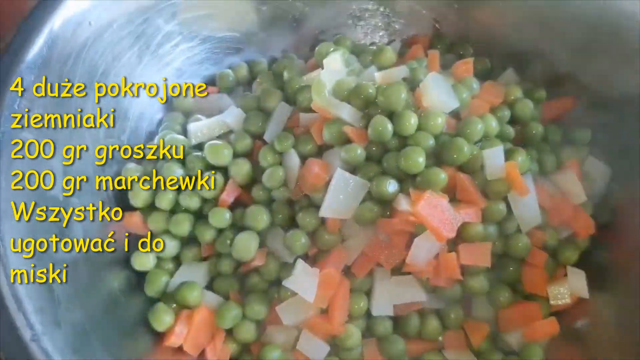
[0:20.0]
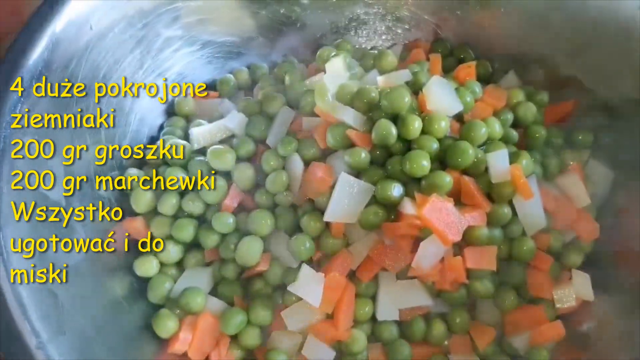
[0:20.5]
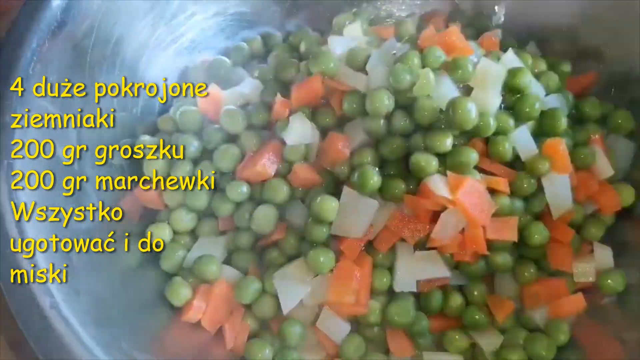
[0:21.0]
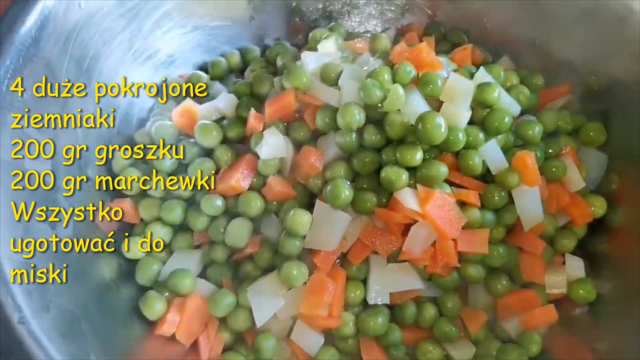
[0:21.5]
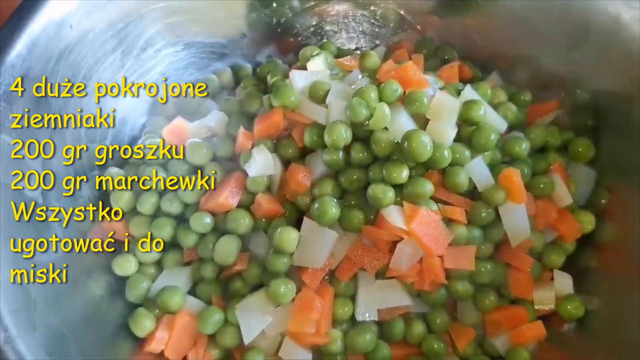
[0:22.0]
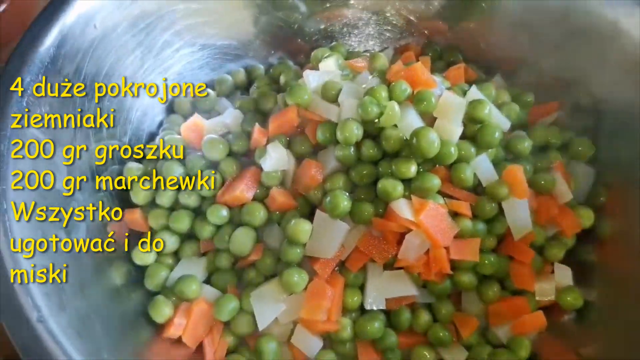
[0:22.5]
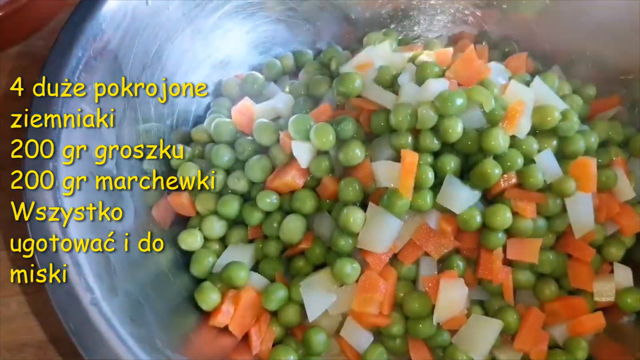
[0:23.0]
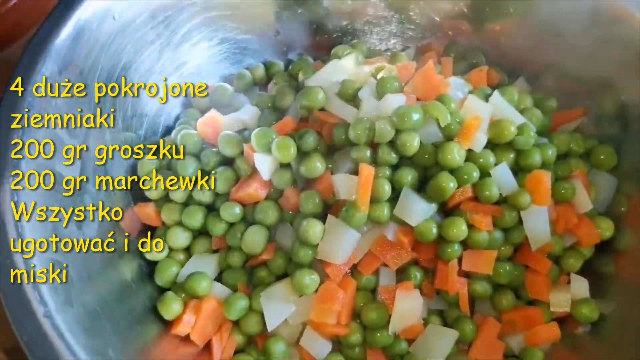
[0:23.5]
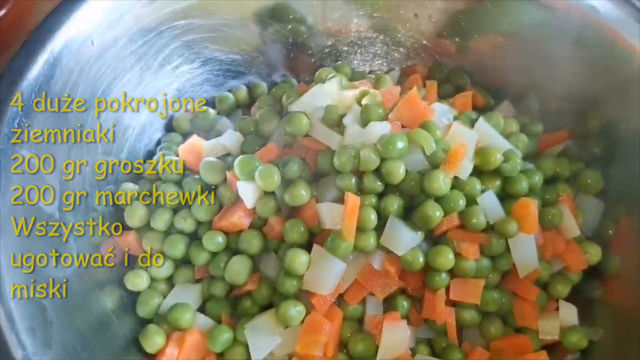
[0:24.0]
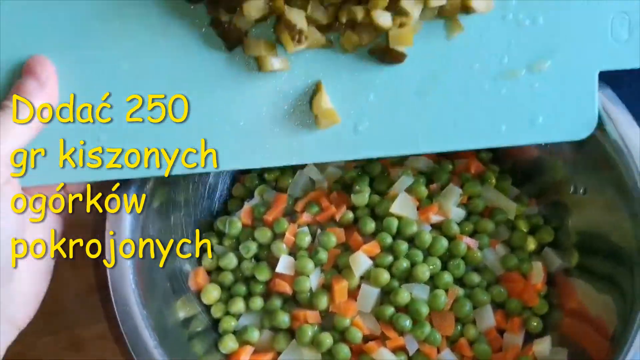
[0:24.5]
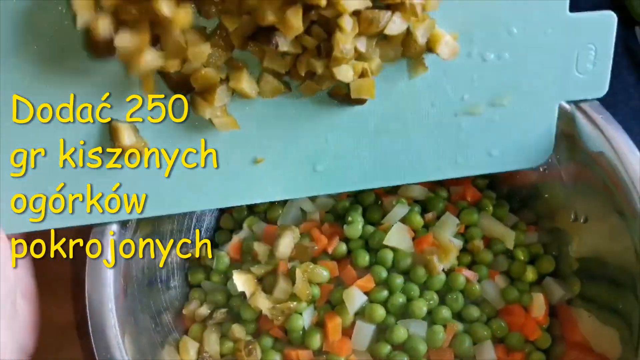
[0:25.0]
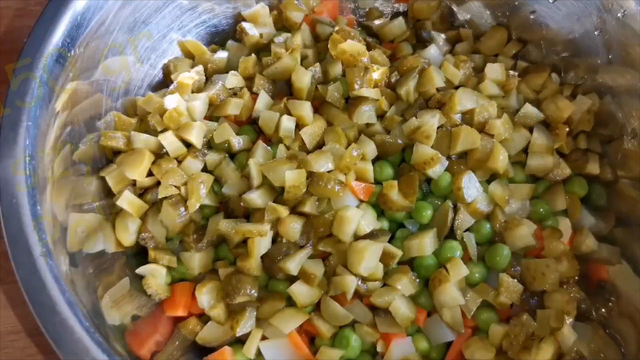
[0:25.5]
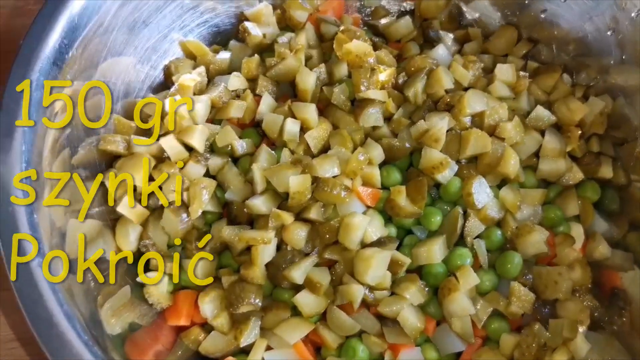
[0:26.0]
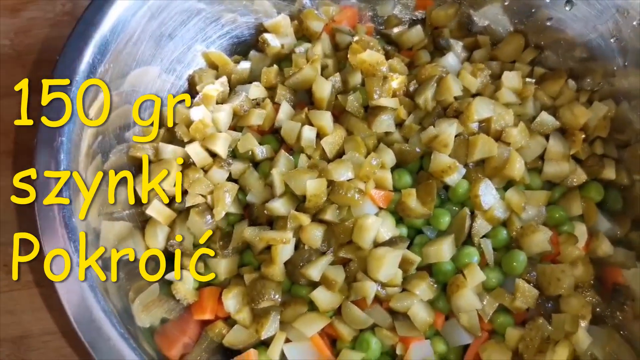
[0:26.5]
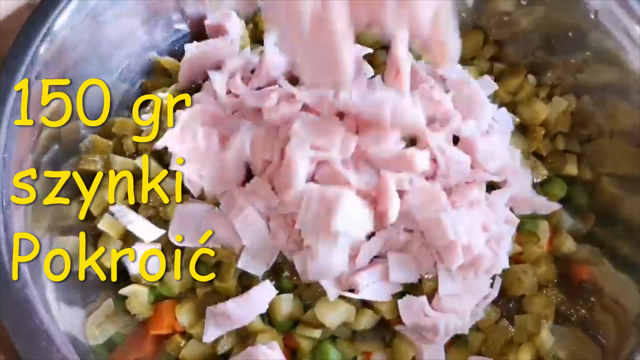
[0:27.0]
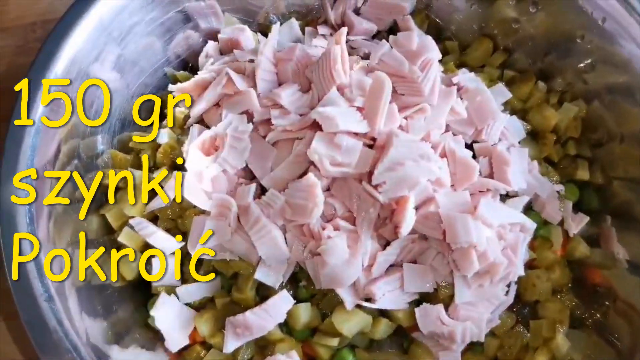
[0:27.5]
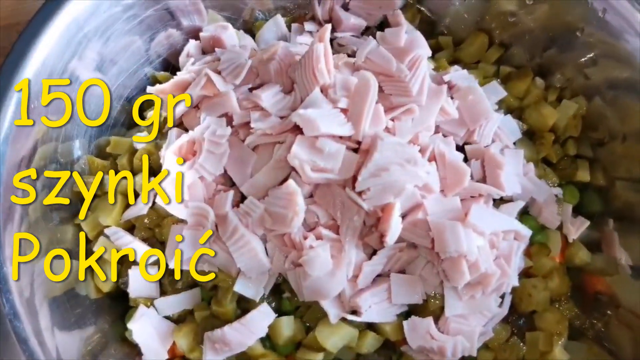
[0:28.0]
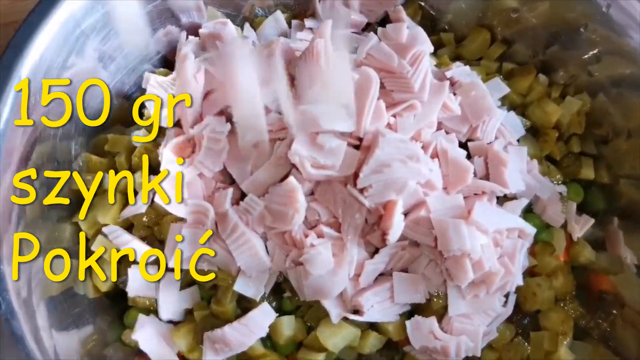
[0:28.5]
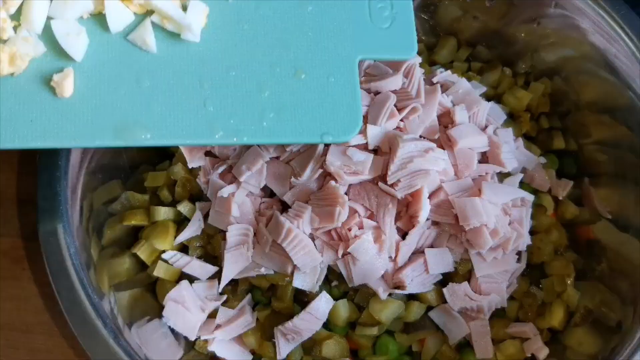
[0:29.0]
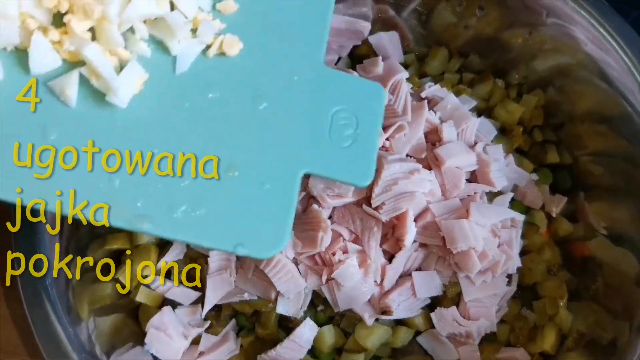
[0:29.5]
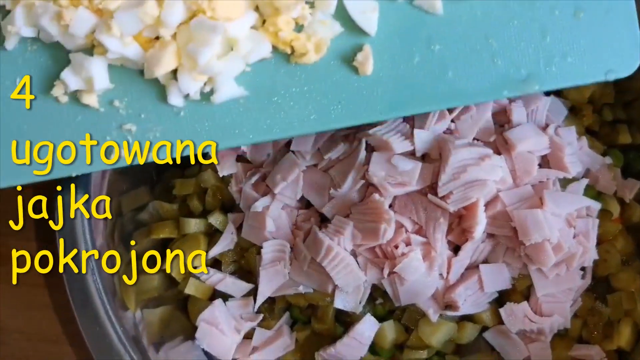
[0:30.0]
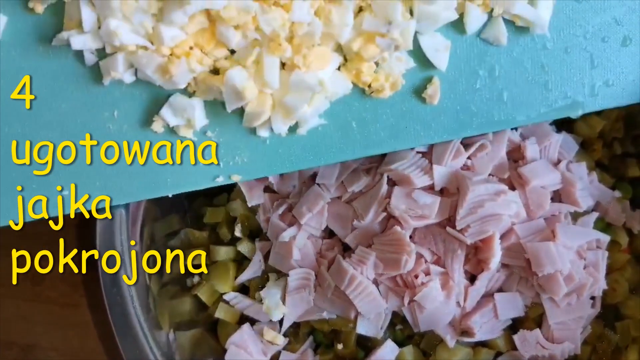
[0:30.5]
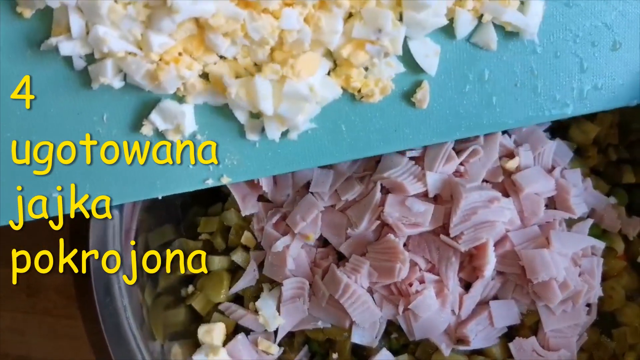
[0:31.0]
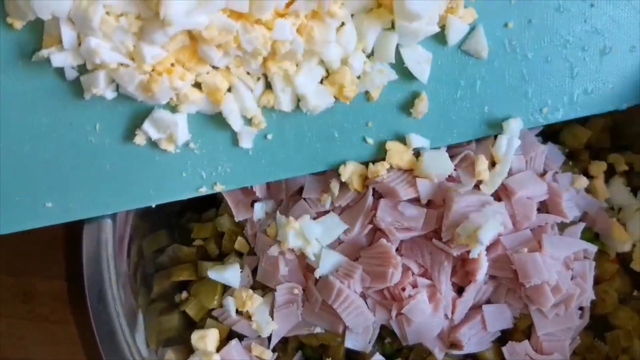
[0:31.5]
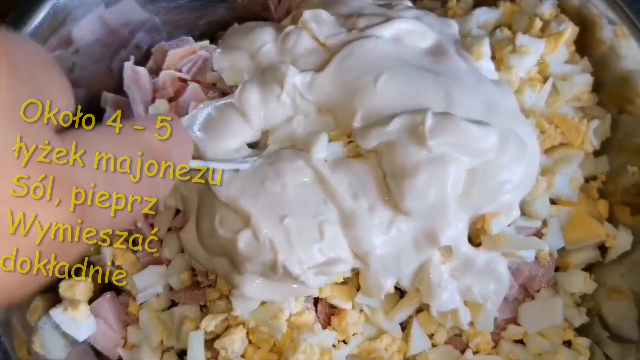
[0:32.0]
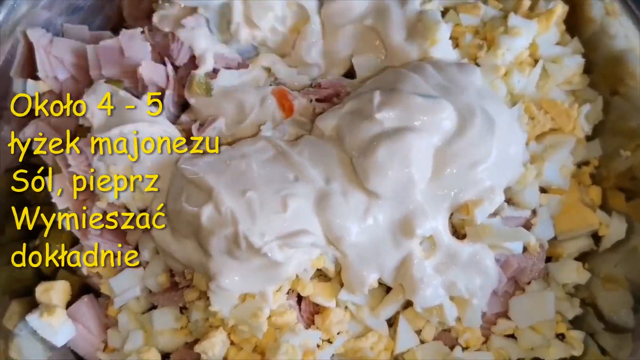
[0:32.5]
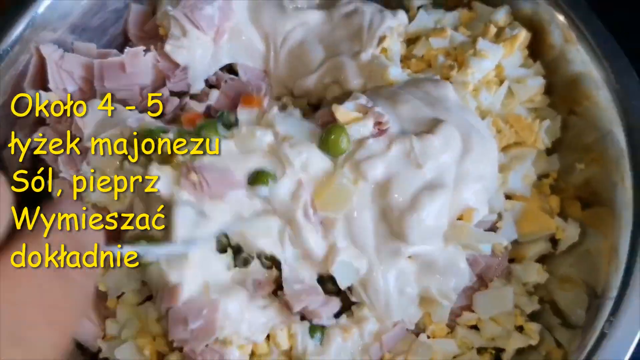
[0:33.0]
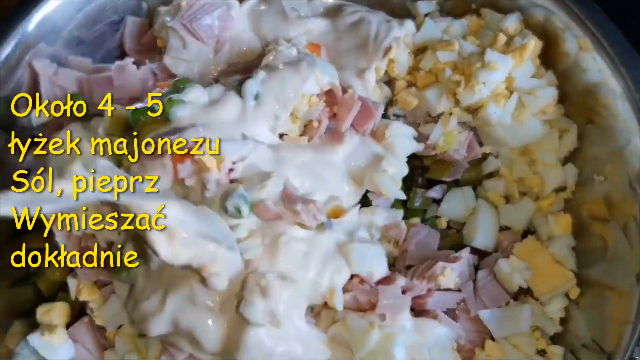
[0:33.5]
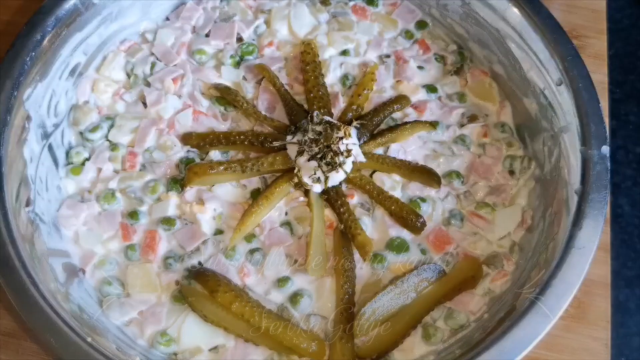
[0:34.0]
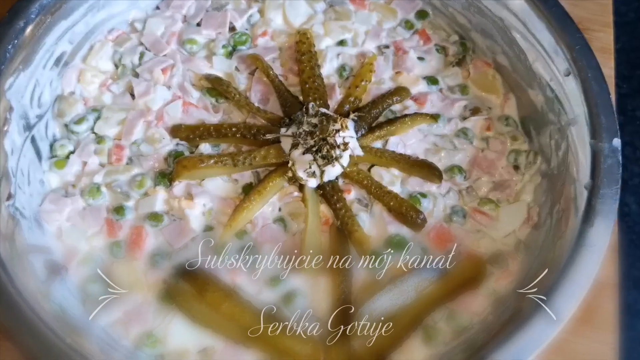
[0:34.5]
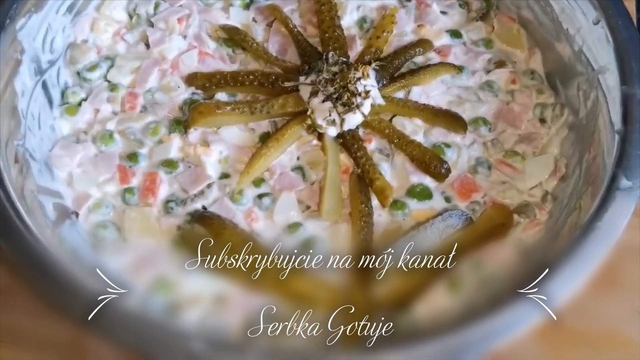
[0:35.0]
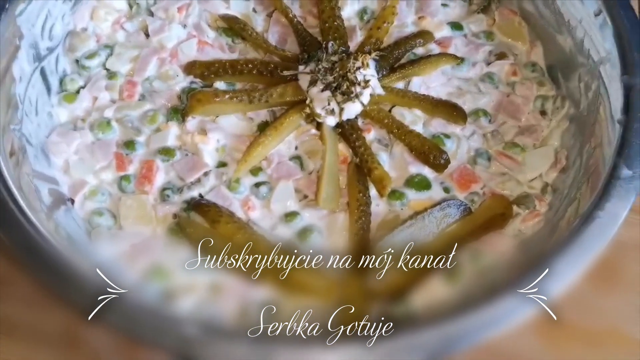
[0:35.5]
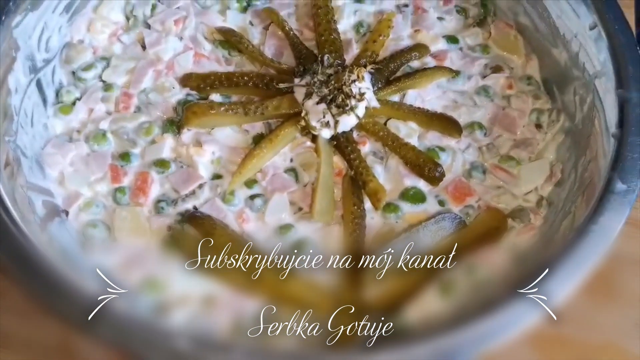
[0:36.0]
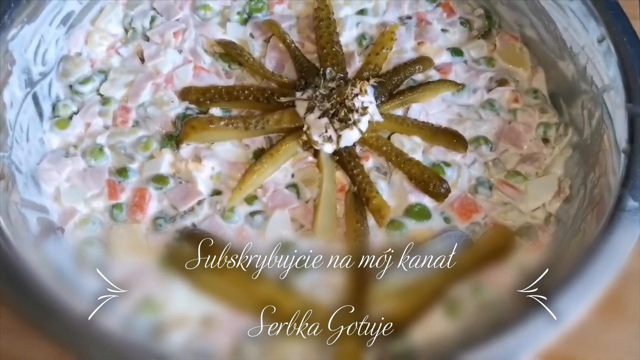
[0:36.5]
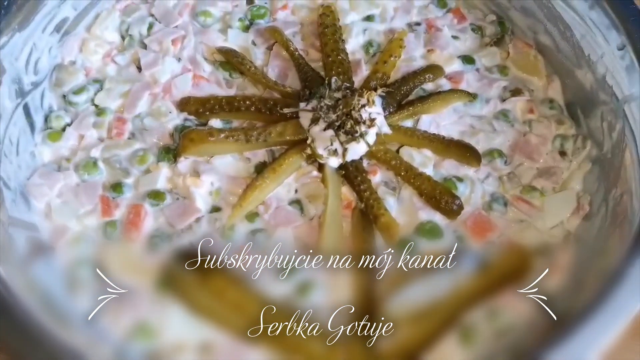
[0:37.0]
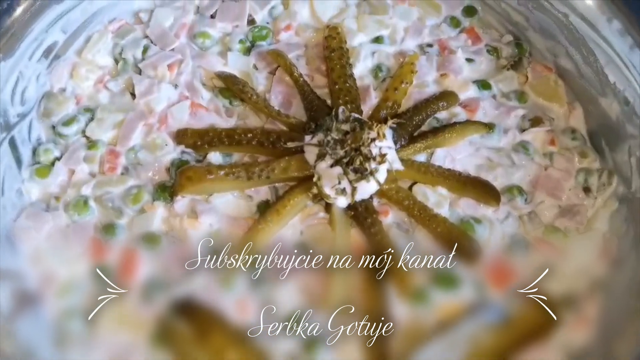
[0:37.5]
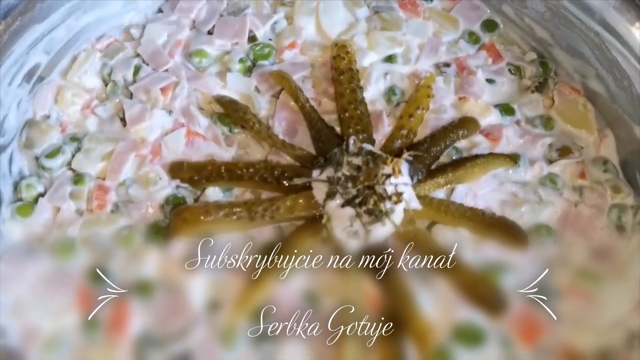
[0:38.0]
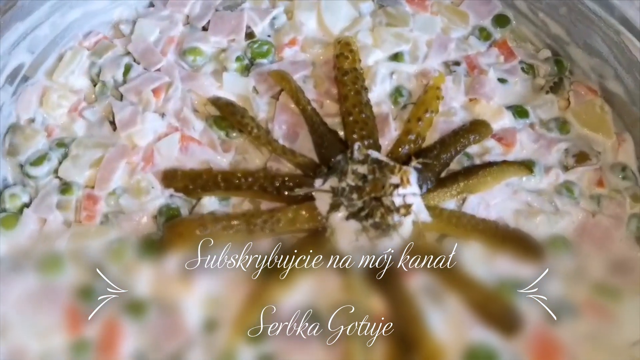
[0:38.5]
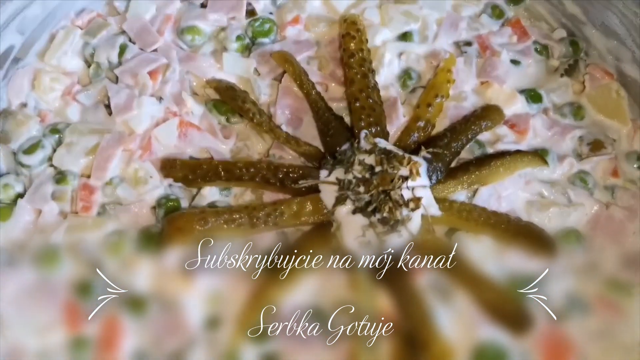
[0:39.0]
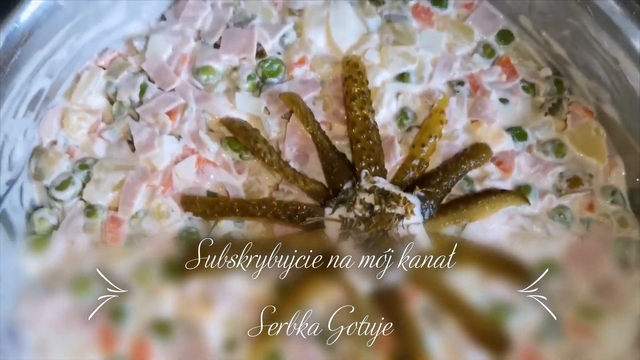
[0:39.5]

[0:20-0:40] Hot, steaming green peas, cubed carrots, cubed potatoes and cubed onions are shown. Words in bright yellow are written on the left side of the screen in a foreign language; they appear to list the ingredients for the dish being prepared. Someone uses a large serving spoon to keep adding more green peas, potatoes, carrots and onions to the large metal bowl. The person is never seen, but the spoon can be seen moving. Next, a blue, food-safe plastic cutting board appears, and it looks like the person has cubed some pickles and is adding them to the large silver serving bowl. It then looks like some type of meat is added: a pink deli meat, probably smoked ham, though possibly smoked turkey.